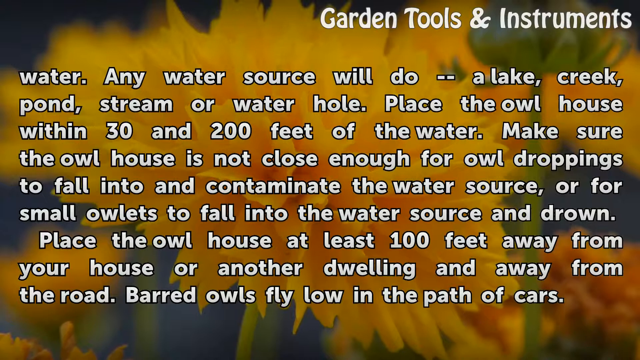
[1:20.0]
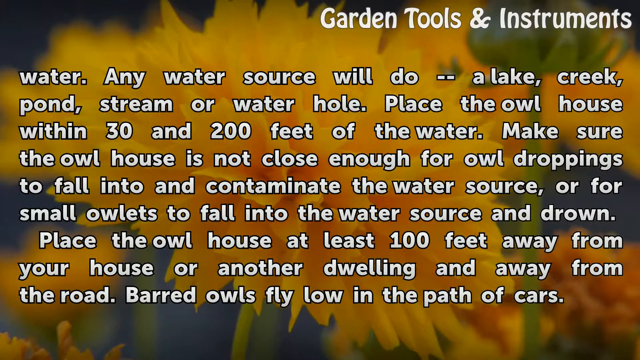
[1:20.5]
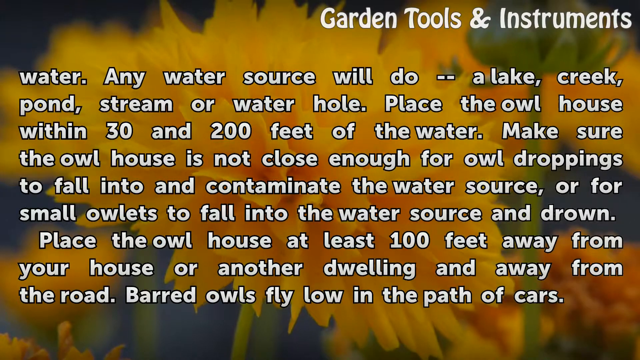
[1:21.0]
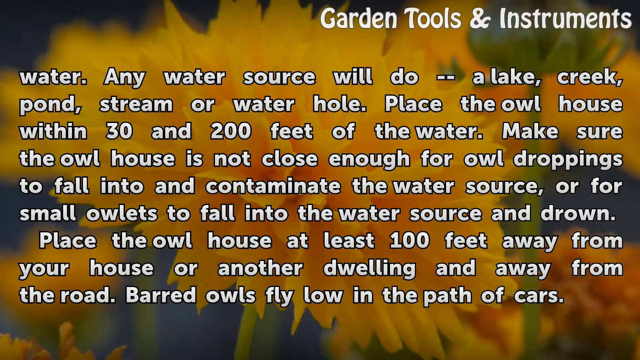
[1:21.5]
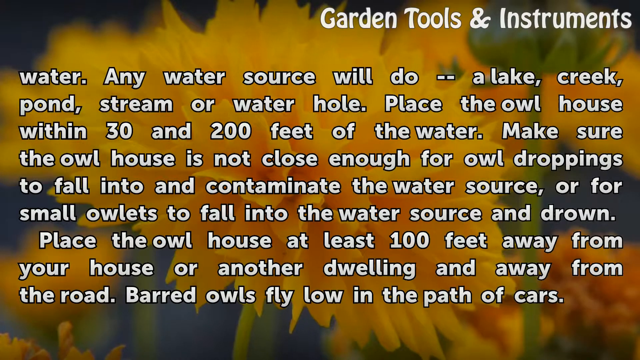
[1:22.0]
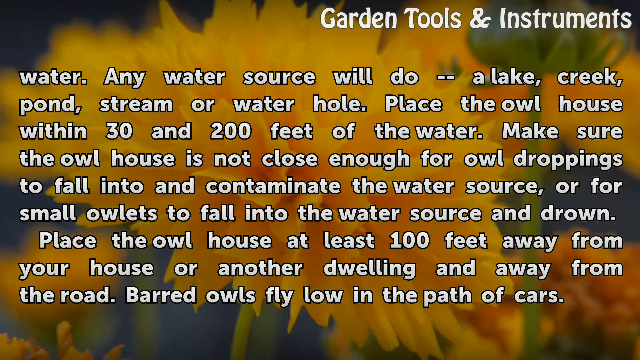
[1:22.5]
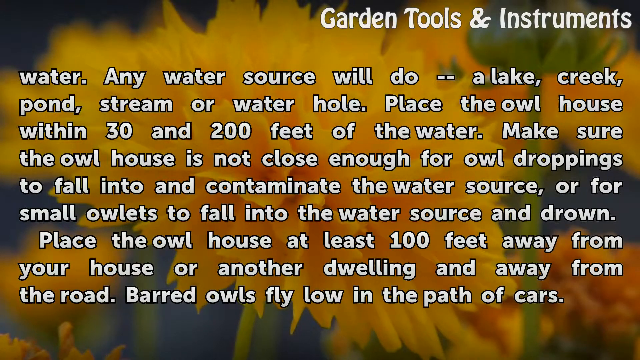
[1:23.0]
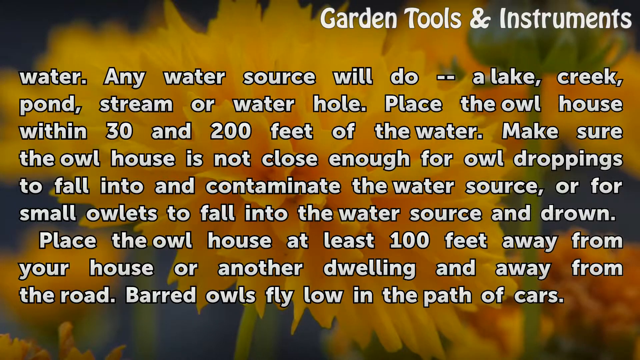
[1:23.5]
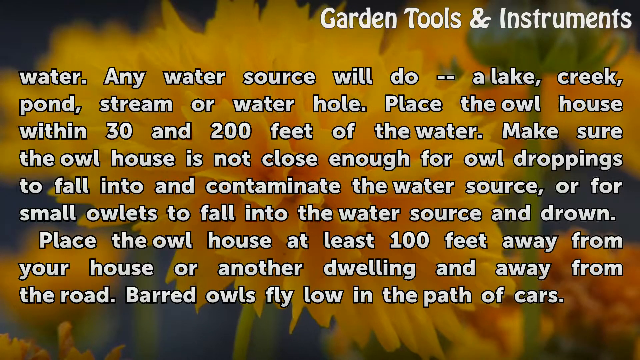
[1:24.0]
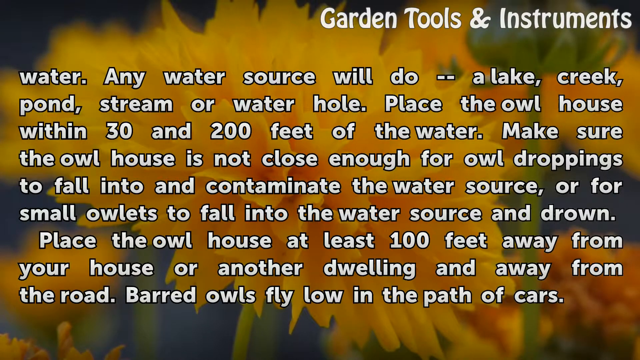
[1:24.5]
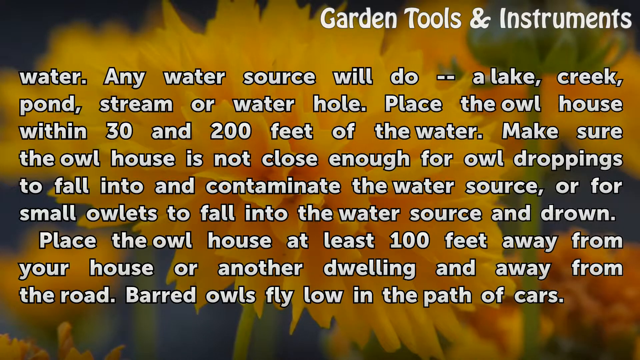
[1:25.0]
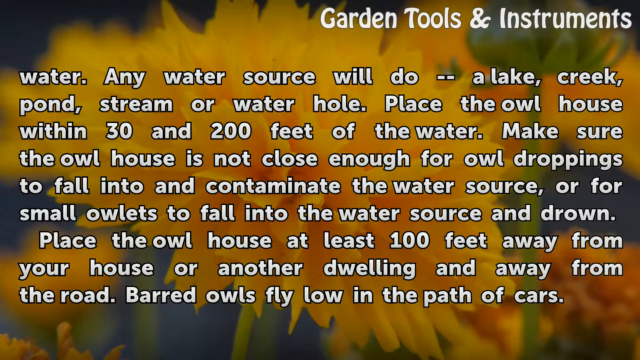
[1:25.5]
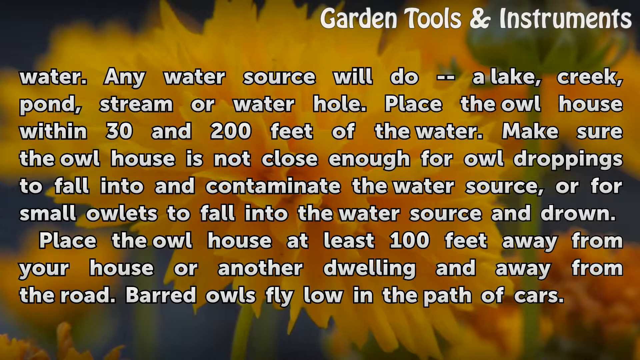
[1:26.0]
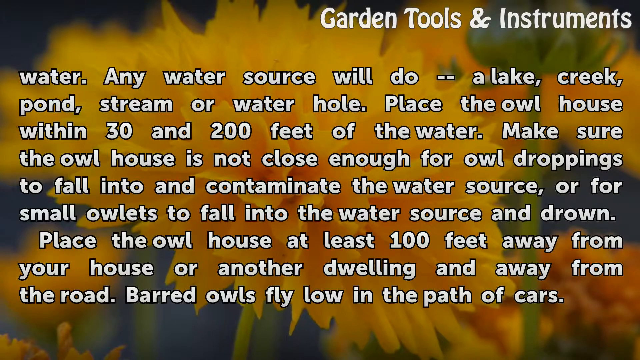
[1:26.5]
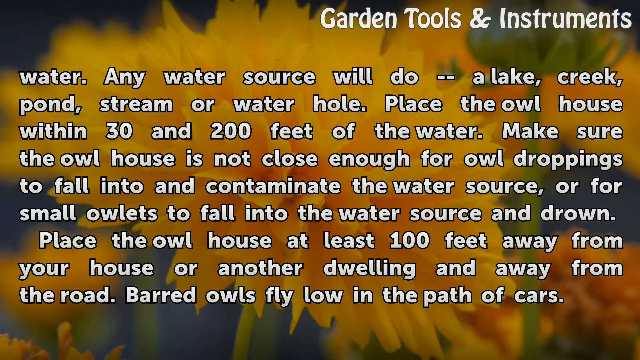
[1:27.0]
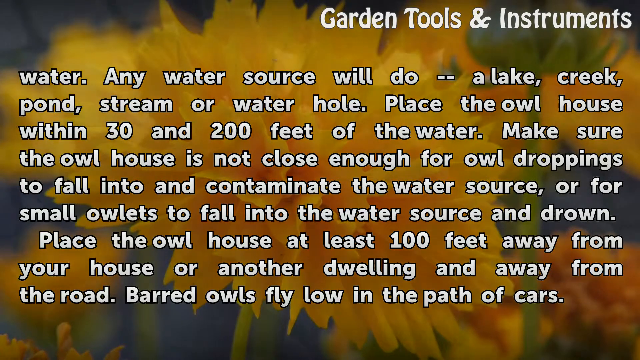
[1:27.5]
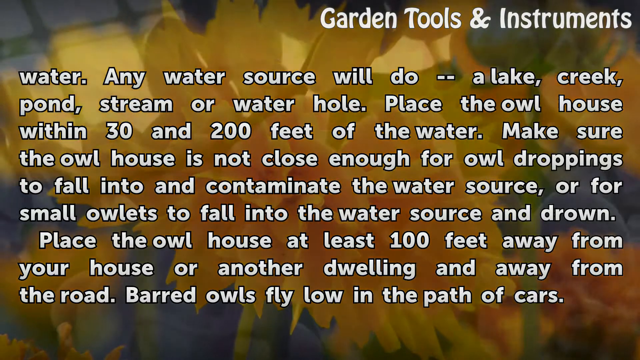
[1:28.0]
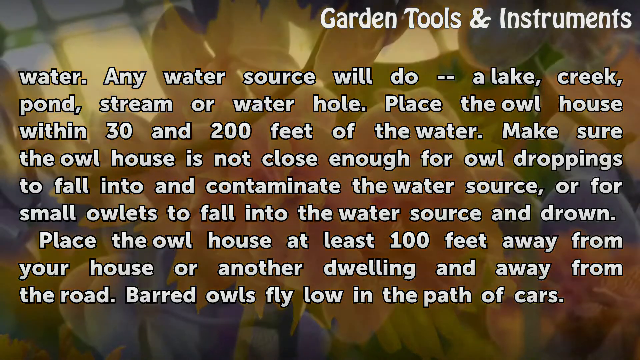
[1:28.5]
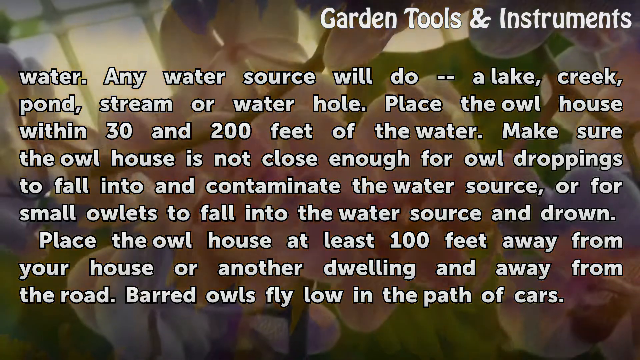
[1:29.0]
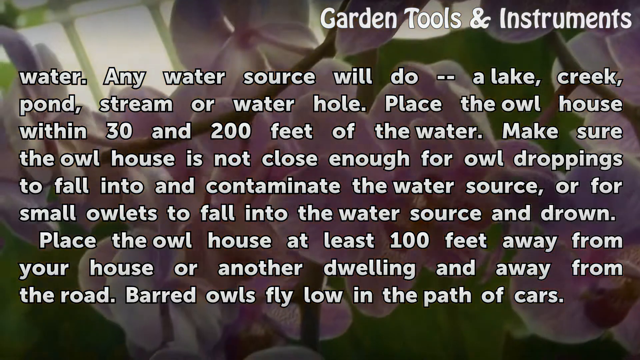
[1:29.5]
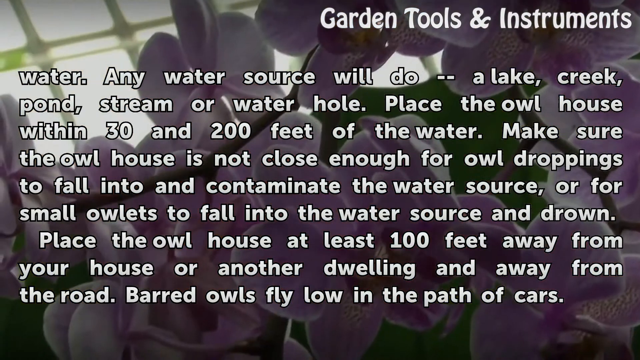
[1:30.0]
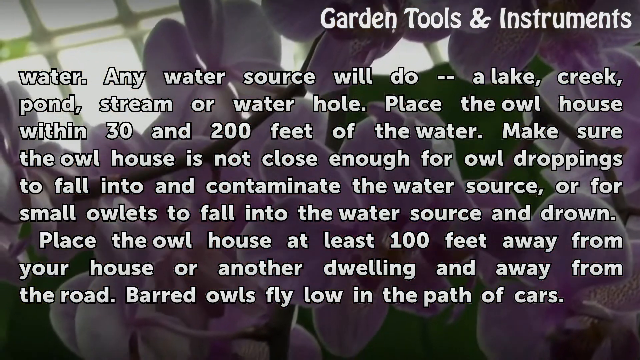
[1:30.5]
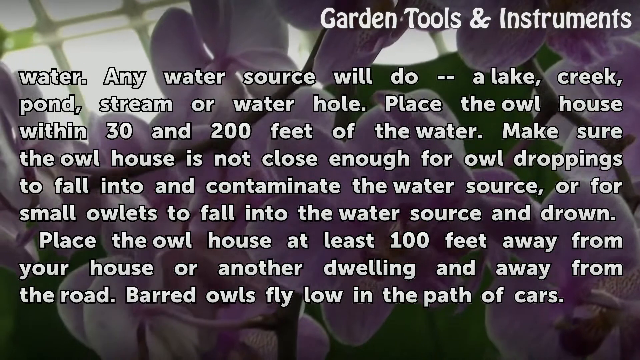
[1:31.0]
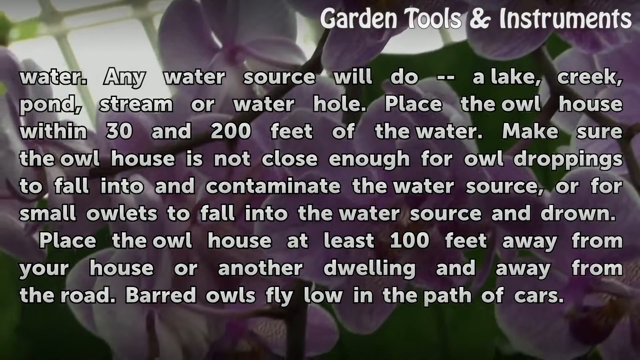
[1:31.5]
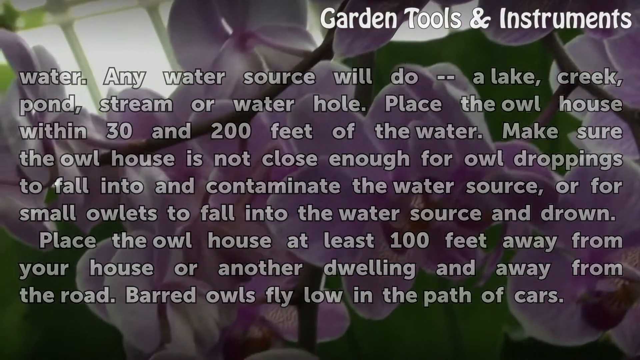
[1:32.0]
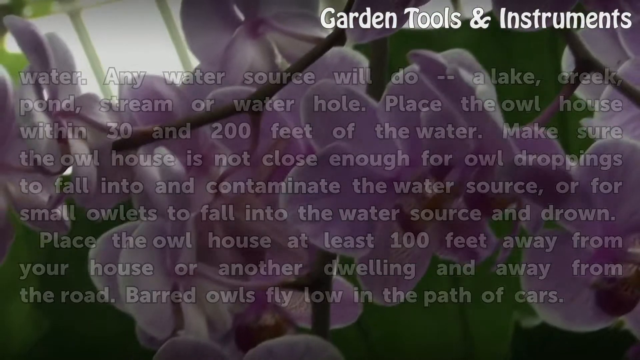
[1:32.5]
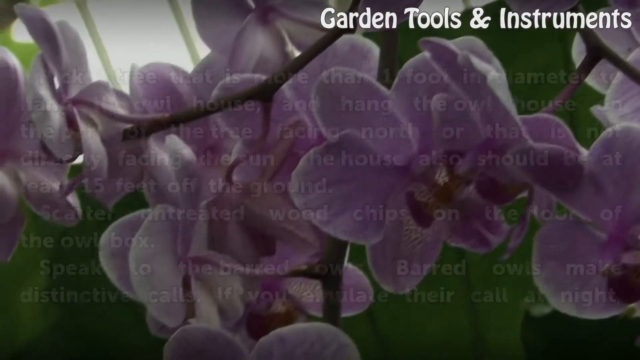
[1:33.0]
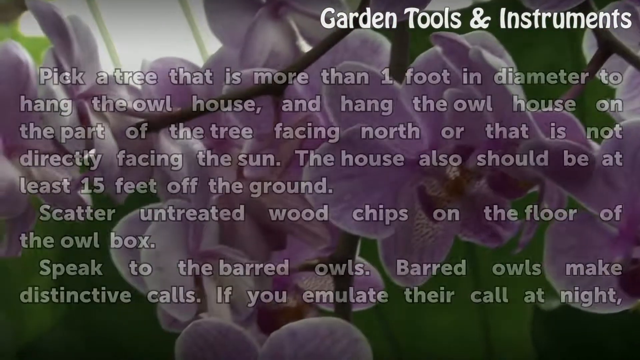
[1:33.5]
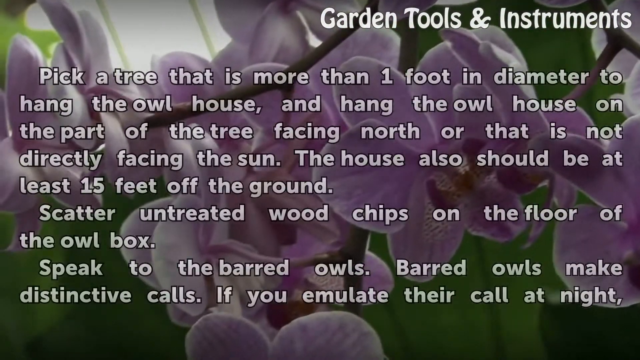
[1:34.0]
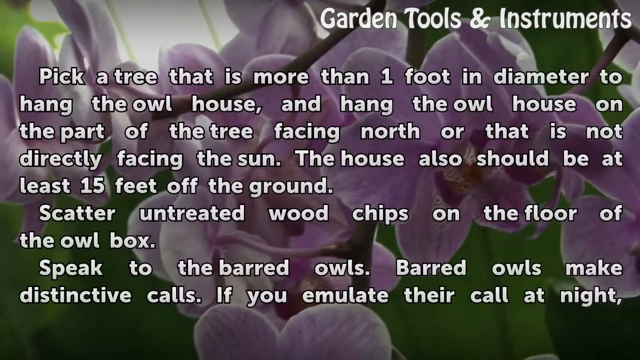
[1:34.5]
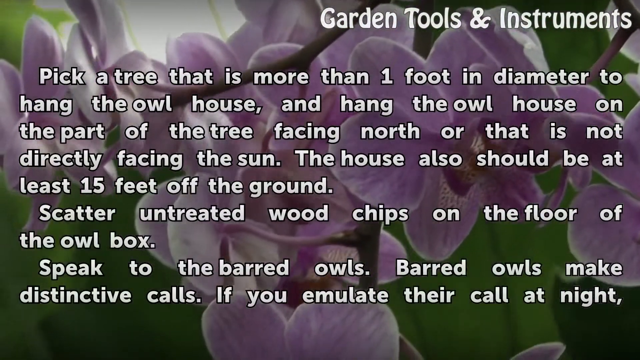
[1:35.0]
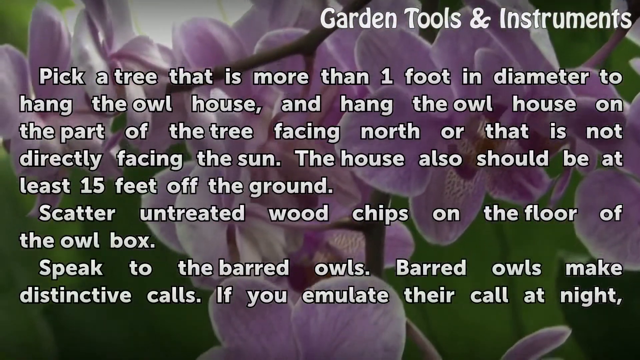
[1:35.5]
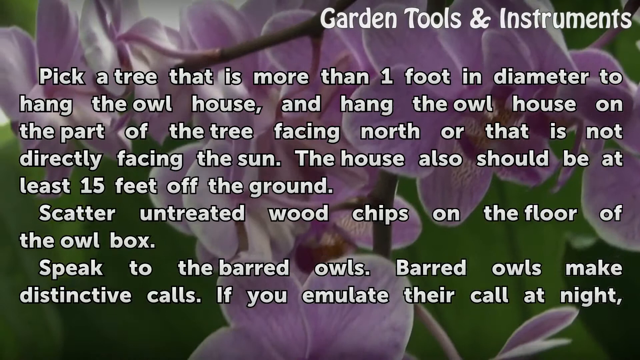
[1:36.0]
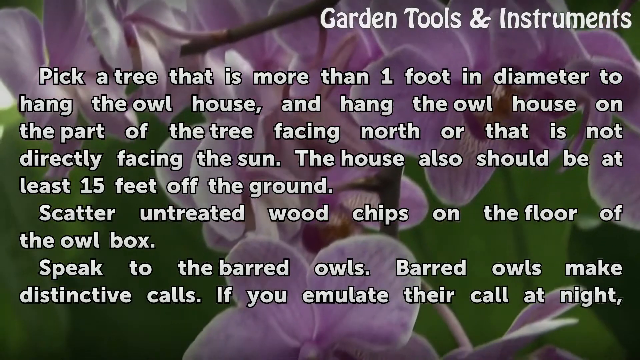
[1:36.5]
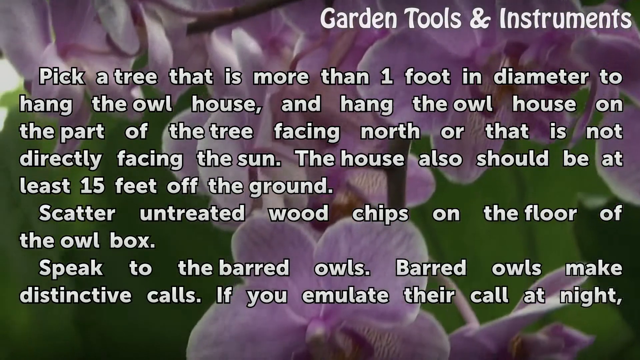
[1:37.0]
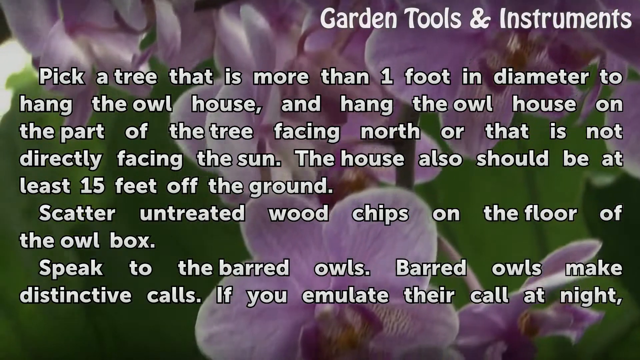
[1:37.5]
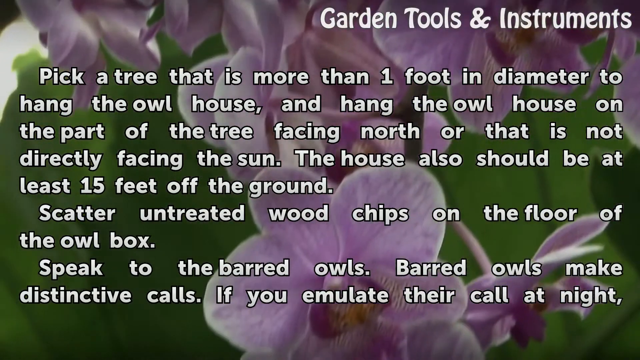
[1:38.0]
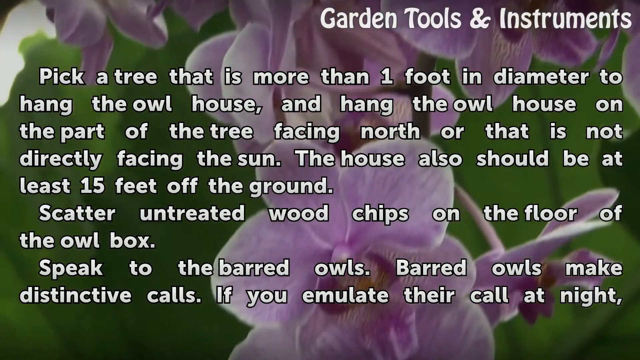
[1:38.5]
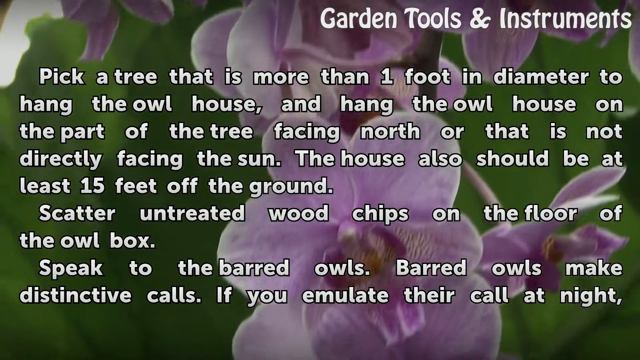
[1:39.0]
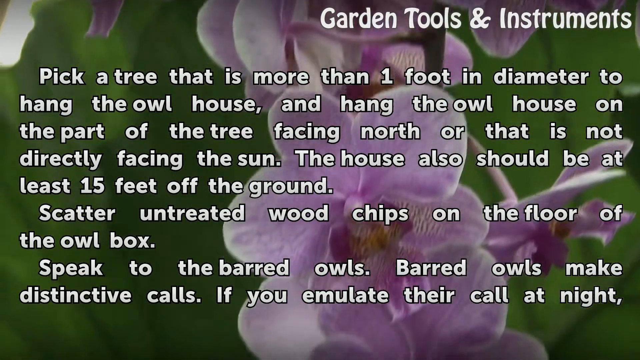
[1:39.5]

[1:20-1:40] The background is a close-up of a large round yellow flower whose petals stick out somewhat everywhere and have pointed tips, so it looks somewhat like a round yellow spiky ball. White text covering the screen continues from the previous slide: "water. Any water source will do -- a lake, creek, pond, stream, or waterhole. Place the owl house within 30 and 200 feet of the water. Make sure the owl house is not close enough for owl droppings to fall into and contaminate the water source or for small owlets to fall into the water source and drown. Place the owl house at least 100 feet away from your house or another dwelling and away from the road. Barred owls fly low in the path of cars." The background then changes to a close-up video of small flowers with light lavender colored round leaves, somewhat bunched up on a branch hanging from a thin light brown stem. The white text now reads: "Pick a tree that is more than one foot in diameter to hang the owl house, and hang the owl house on the part of the tree facing north or that is not directly facing the sun. The house also should be at least 15 feet off the ground. Scatter untreated wood chips on the floor of the owl house. Speak to the barred owls. Barred owls make distinctive calls. If you emulate their call at night..."